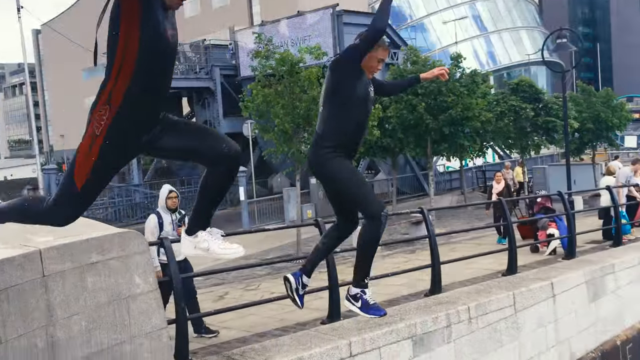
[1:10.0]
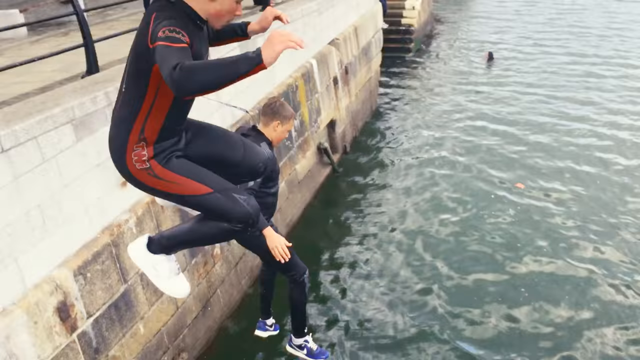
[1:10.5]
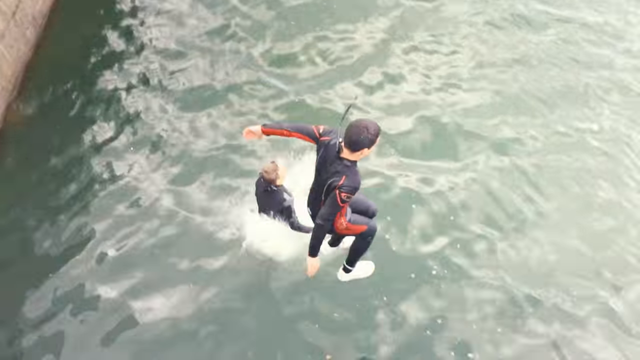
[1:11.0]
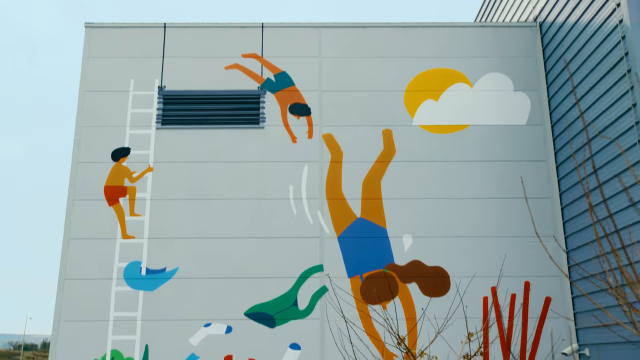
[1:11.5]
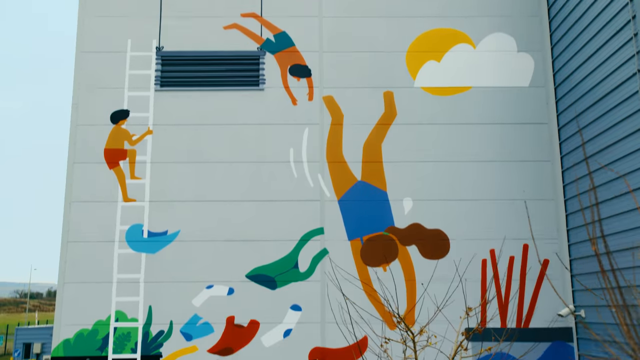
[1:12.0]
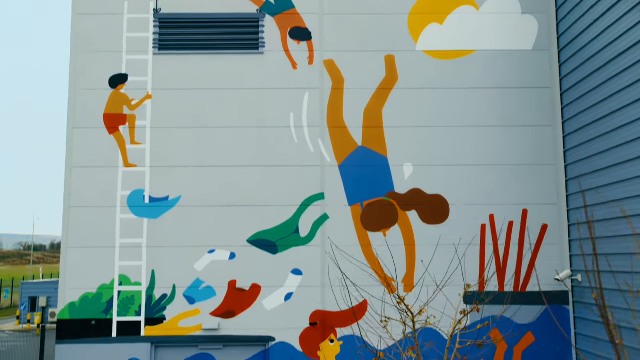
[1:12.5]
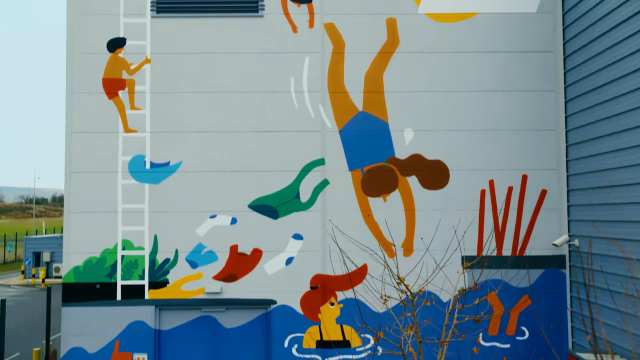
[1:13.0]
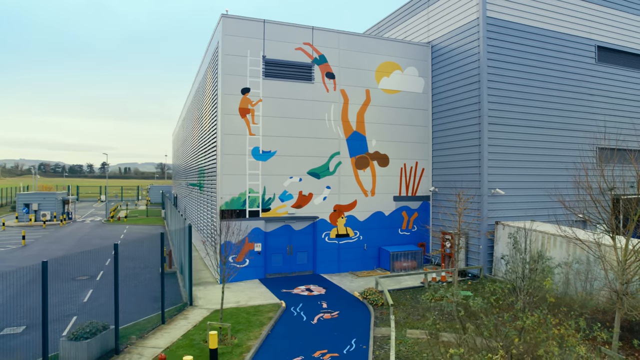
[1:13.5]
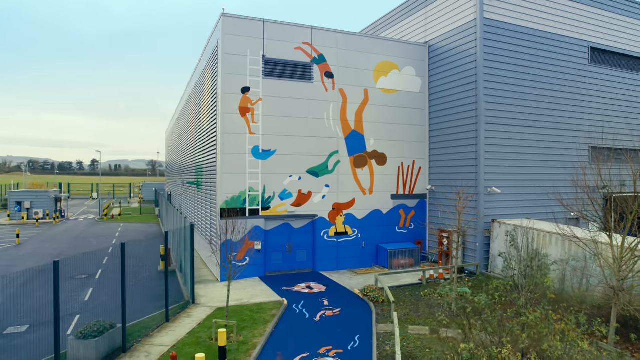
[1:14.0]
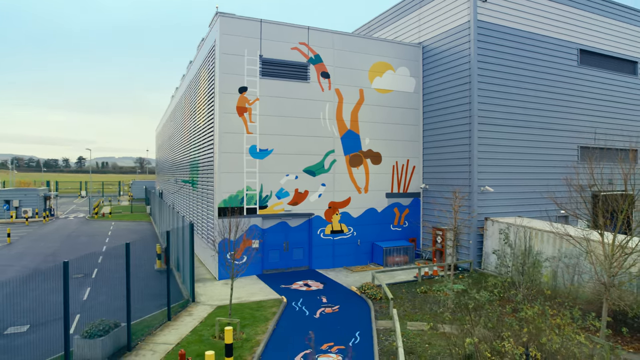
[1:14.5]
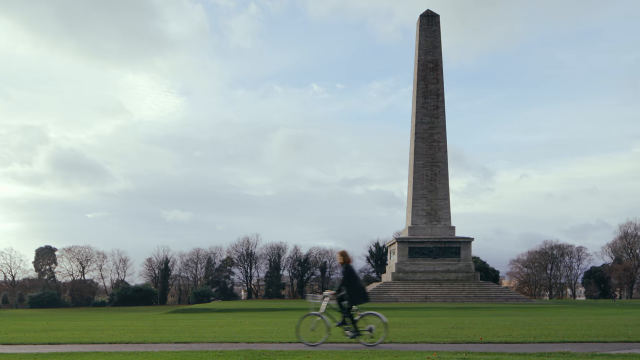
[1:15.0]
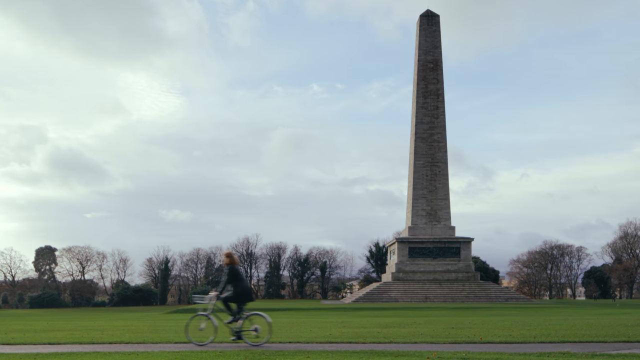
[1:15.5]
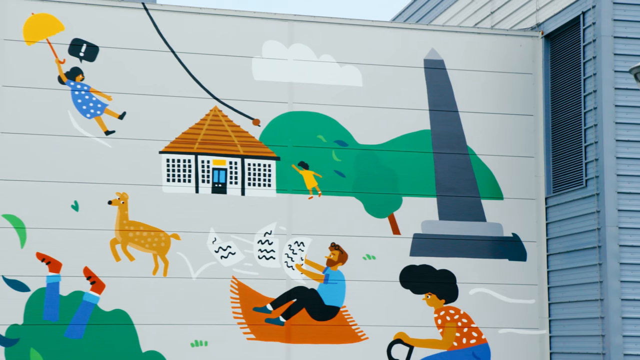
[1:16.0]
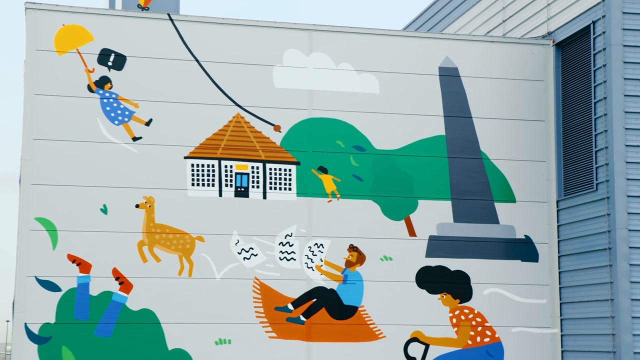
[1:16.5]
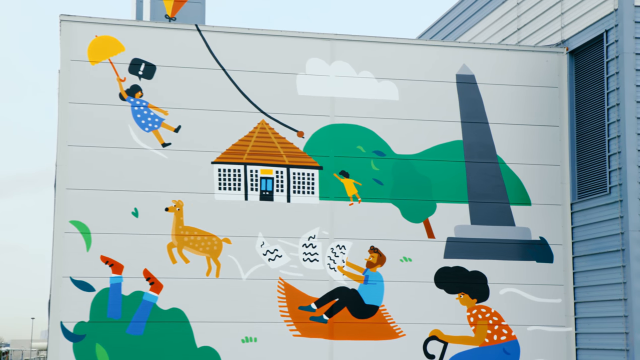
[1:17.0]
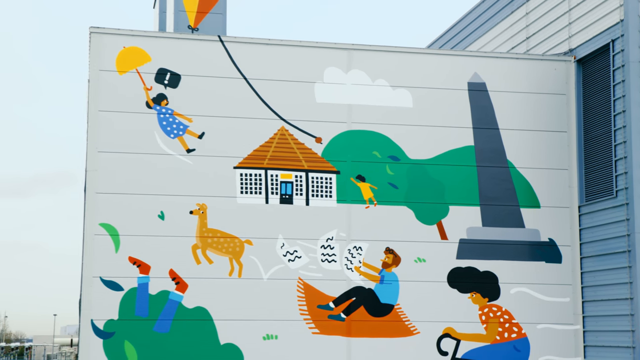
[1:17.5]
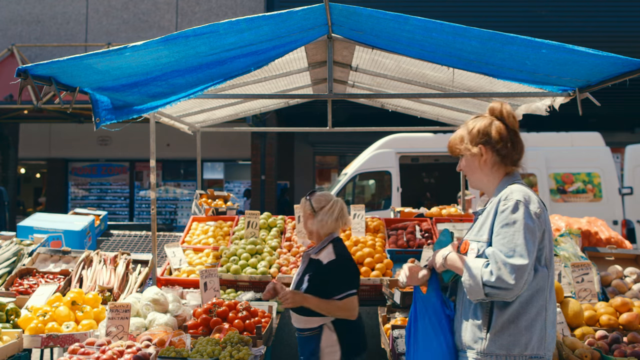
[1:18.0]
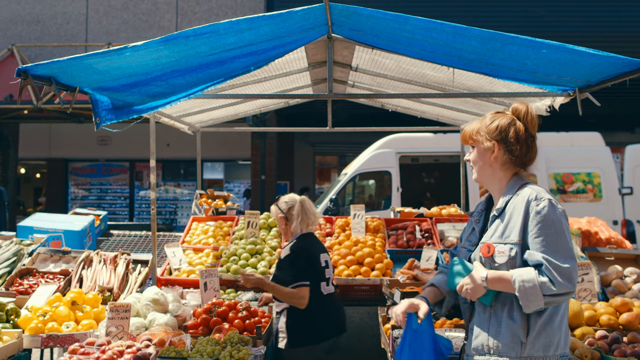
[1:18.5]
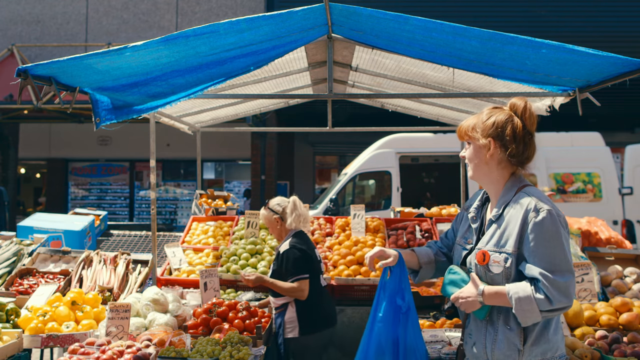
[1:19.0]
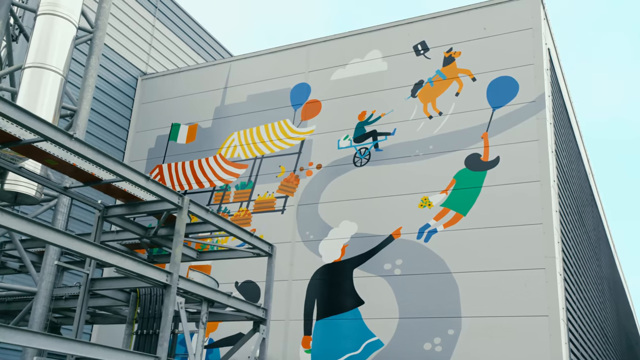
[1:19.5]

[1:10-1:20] The two people in jumpsuits jump down into the water and make contact with it, with apparently some people around them. More artwork on the side of the building shows various people jumping from the top of a ledge into water, very cartoony and painted on the side of the large Google building: two people diving in and a woman in the water. Other artwork, possibly on the other side of the building, shows a seated man who looks like he is having a picnic while reading a newspaper, with the Washington Monument to his right. Fuchsia is also seen on her bike, riding past the Washington Monument, and the artwork includes a llama. All of it is painted very large on the side of the building. Fuchsia then appears to be at a market, like a farmer's market, shown for only a split second, where it looks like they are buying something. A little more painted artwork follows.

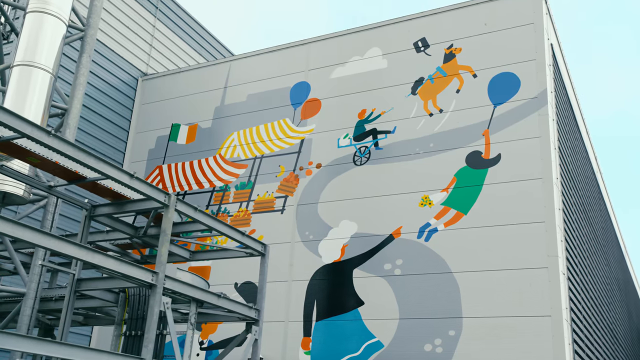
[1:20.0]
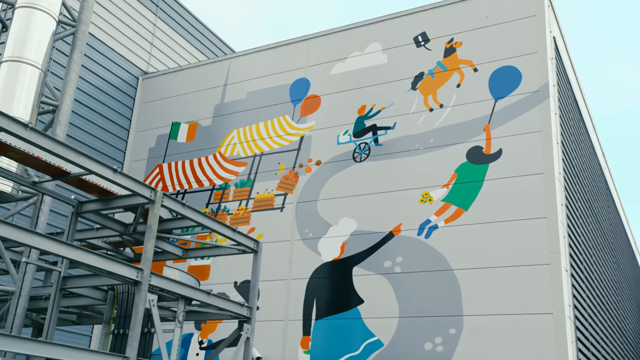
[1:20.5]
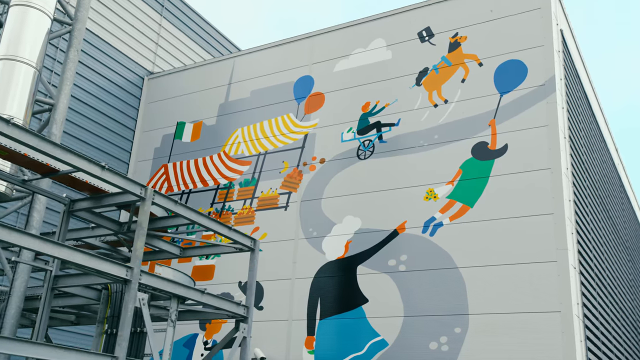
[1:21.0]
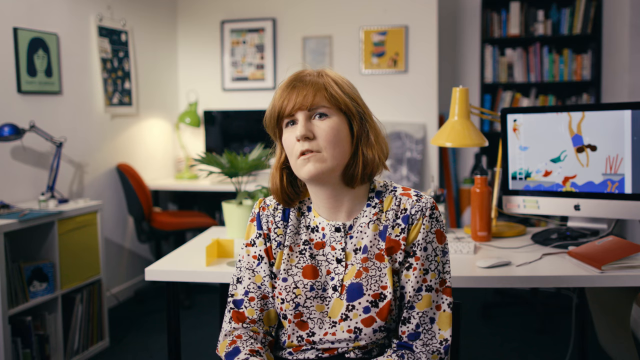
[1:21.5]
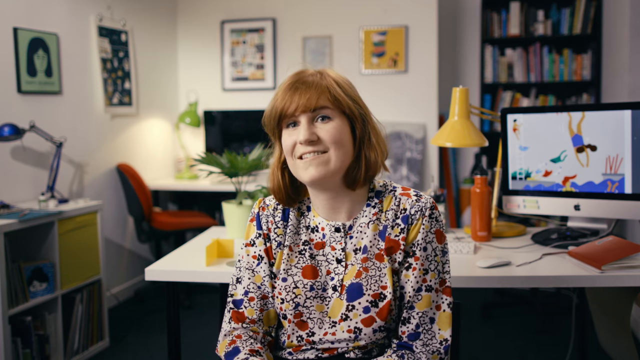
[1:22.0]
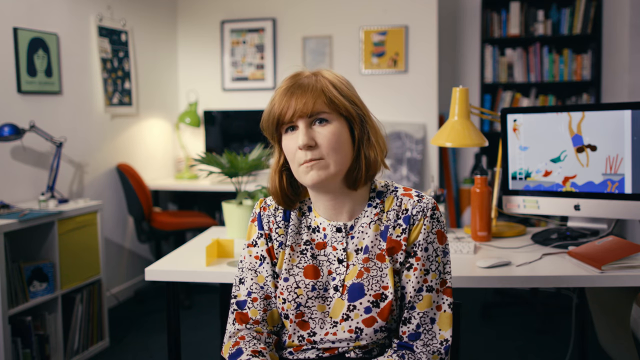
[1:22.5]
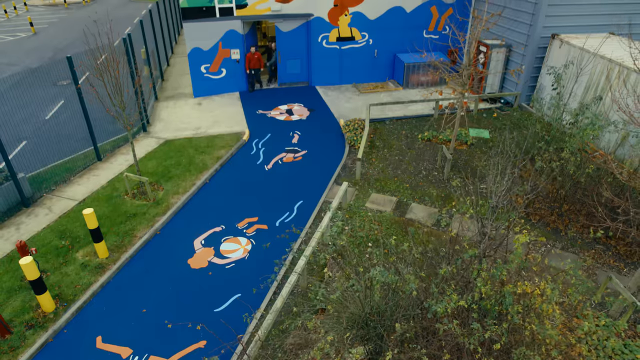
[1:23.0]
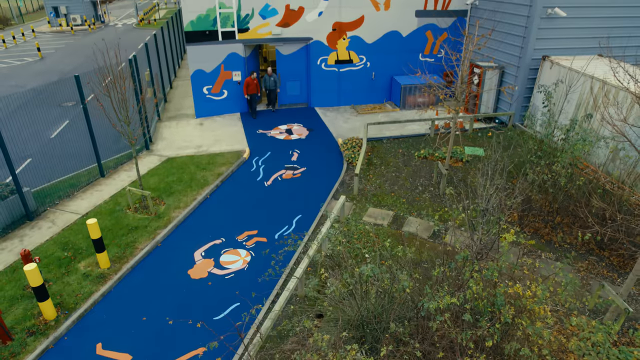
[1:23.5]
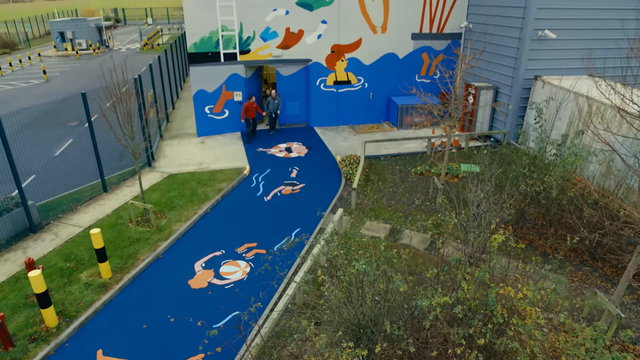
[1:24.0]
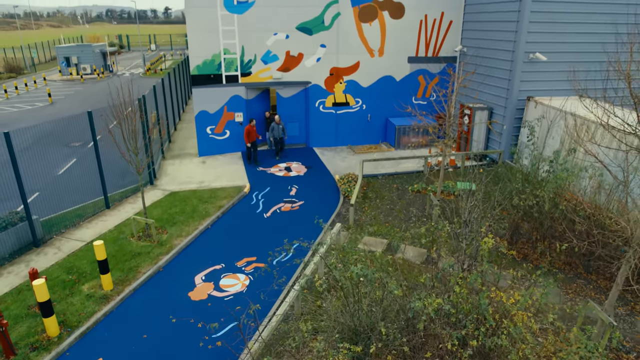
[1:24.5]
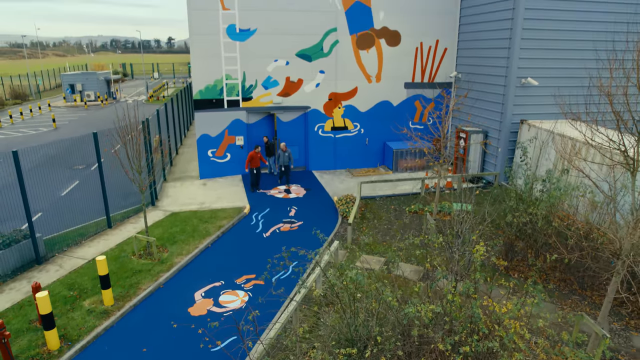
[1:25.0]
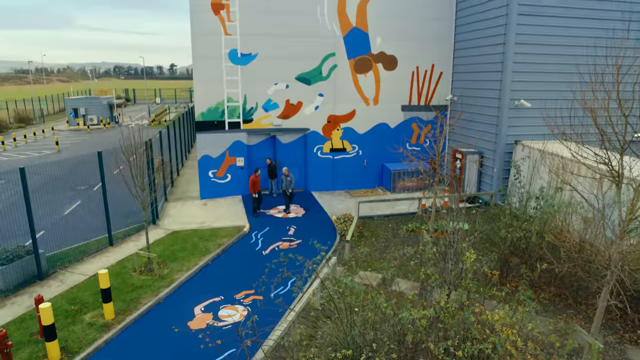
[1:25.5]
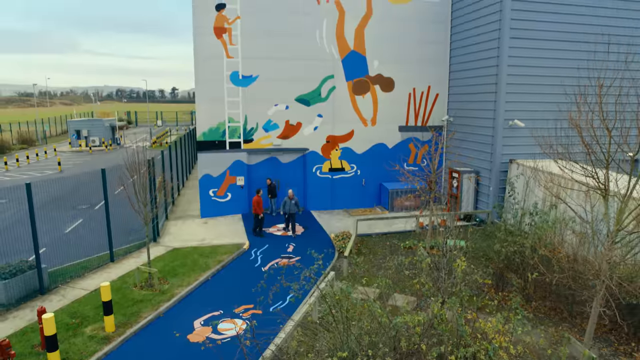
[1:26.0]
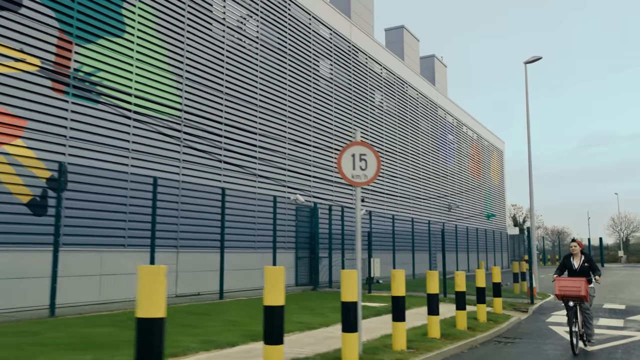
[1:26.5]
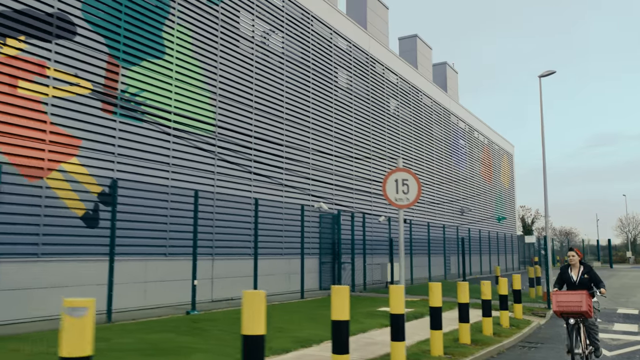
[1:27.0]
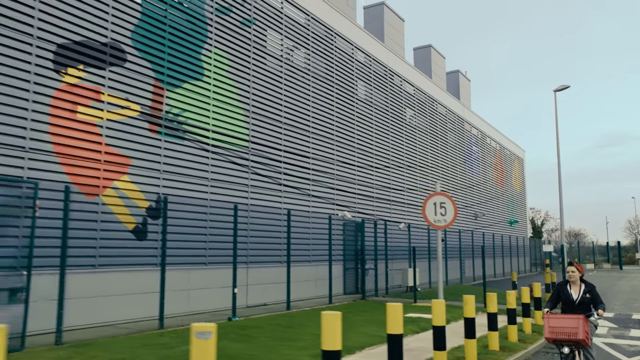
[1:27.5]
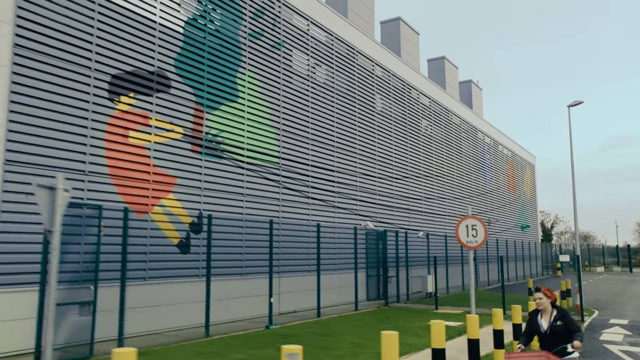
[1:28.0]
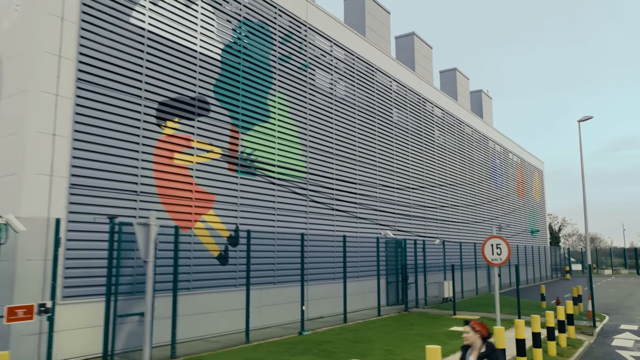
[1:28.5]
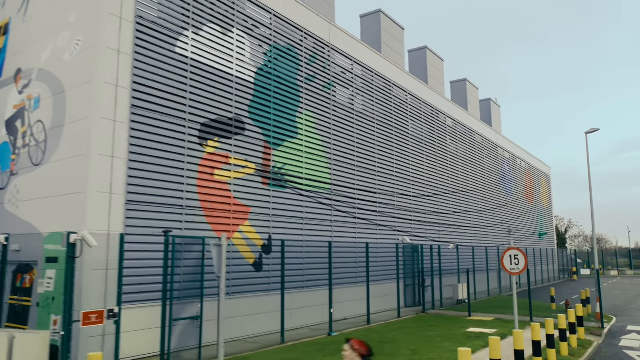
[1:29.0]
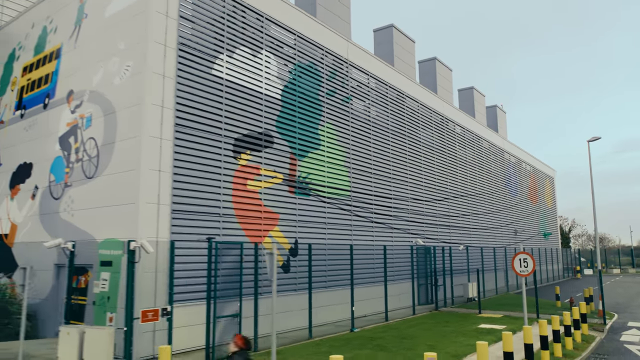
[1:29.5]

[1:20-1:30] The artwork shows a winding road and a little girl in a green dress holding onto a blue balloon as she is blown away. Someone appears to be behind her on the other side of the winding road, seemingly trying to catch her or pointing toward her. The video transitions very fast. On the left of this artwork is a market that looks like the one shown earlier, with two roofs, one red and white and the other yellow and white. Fuchsia, the artist, is then shown being talked to in what looks like an office; she looks straight ahead, wears a very colorful white, red and blue blouse, and speaks for a split second. The video goes right back to her artwork, where apparently three people are leaving the building. The door is painted blue where the water is in the artwork, like a body of water, and there is a sidewalk the gentlemen walk on; she has painted it to look like a floating river.